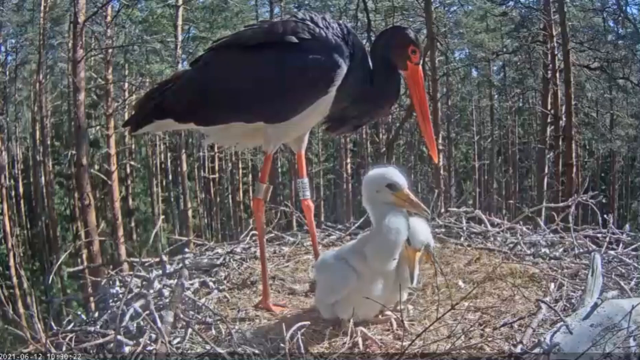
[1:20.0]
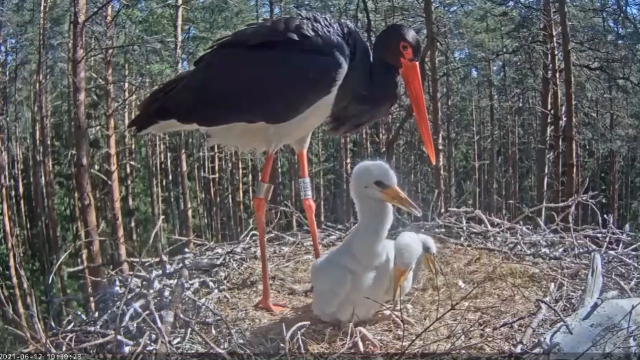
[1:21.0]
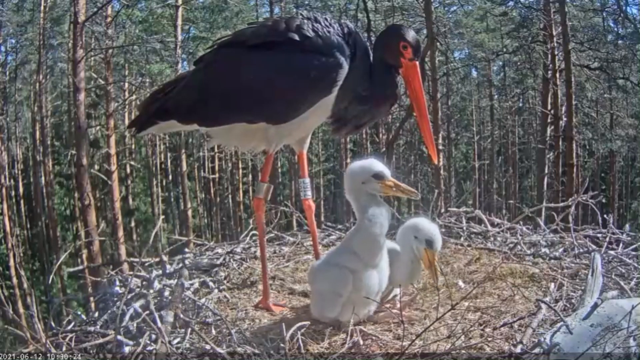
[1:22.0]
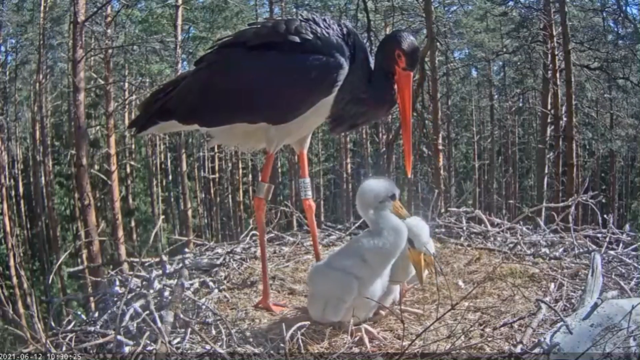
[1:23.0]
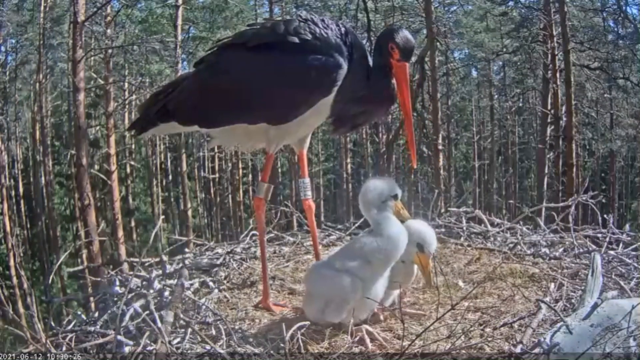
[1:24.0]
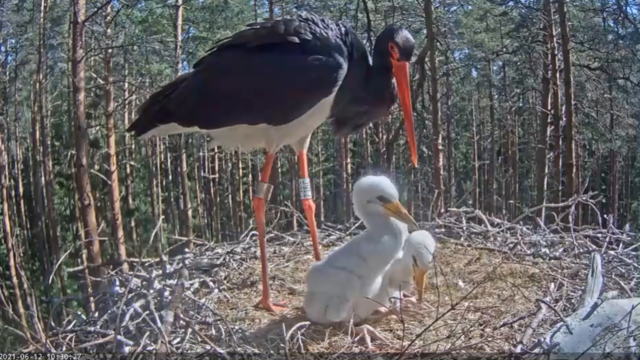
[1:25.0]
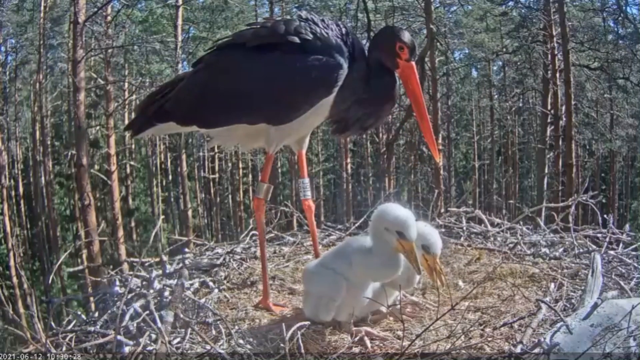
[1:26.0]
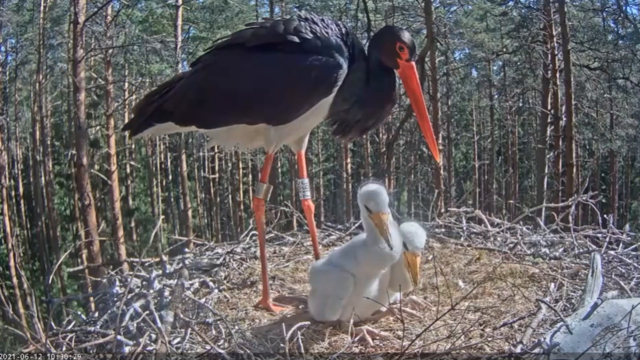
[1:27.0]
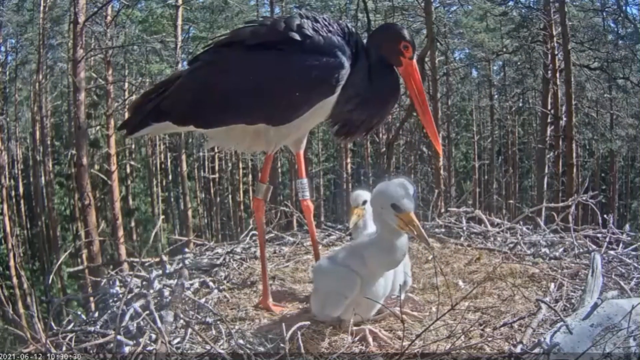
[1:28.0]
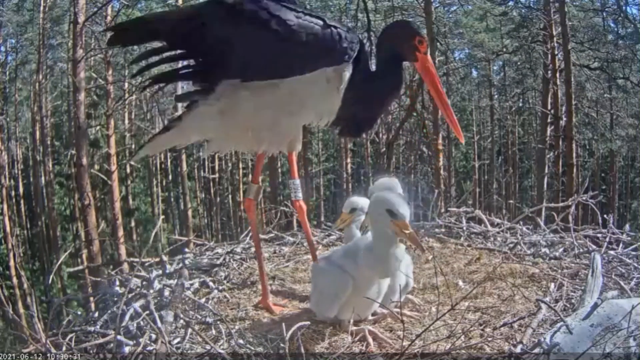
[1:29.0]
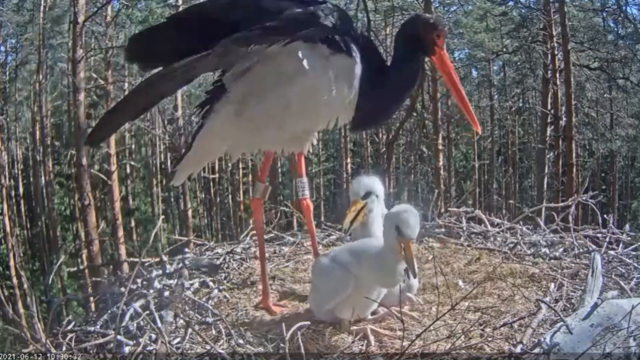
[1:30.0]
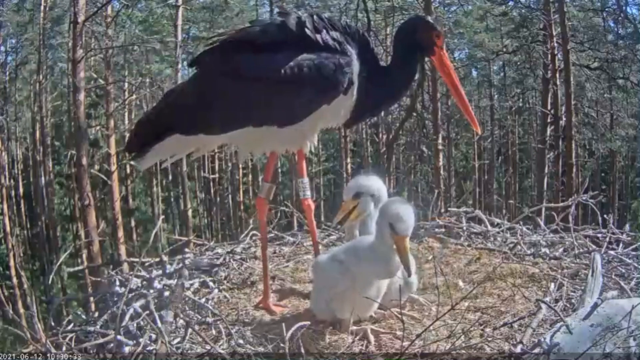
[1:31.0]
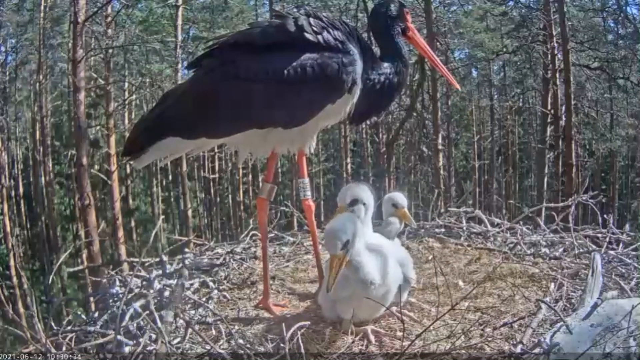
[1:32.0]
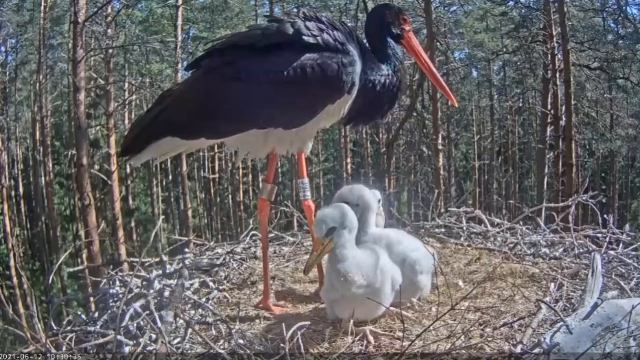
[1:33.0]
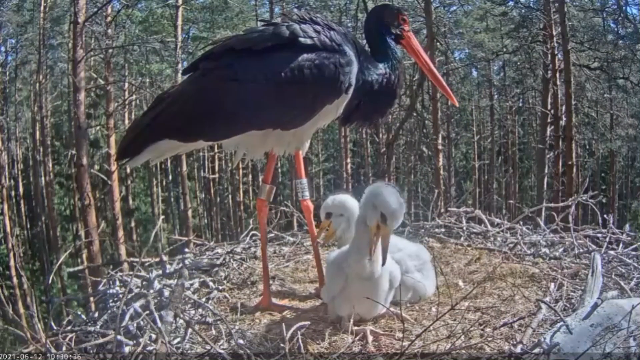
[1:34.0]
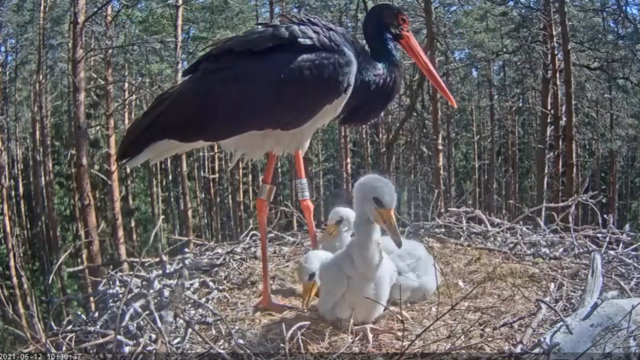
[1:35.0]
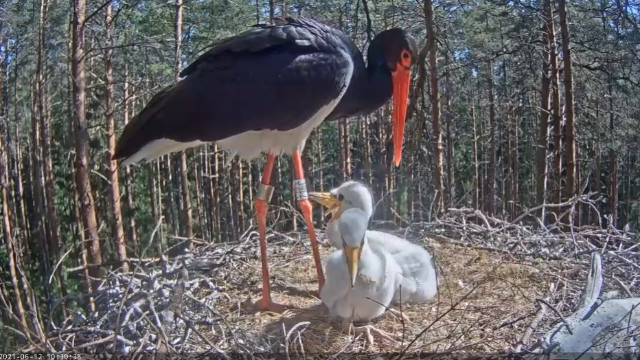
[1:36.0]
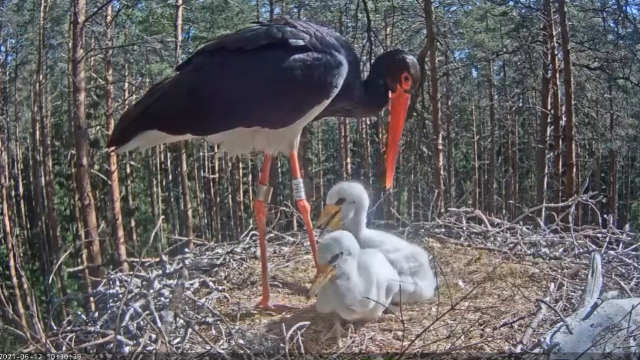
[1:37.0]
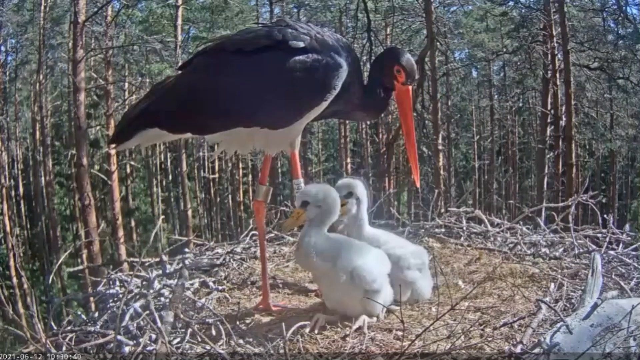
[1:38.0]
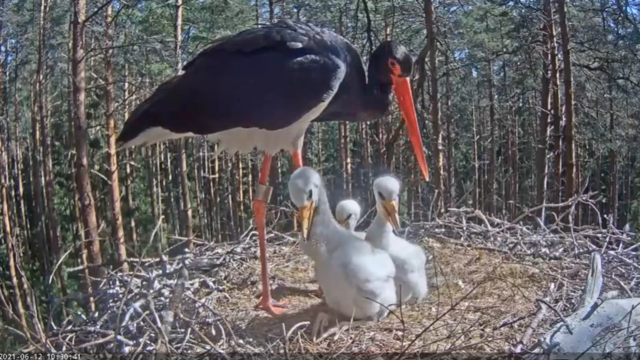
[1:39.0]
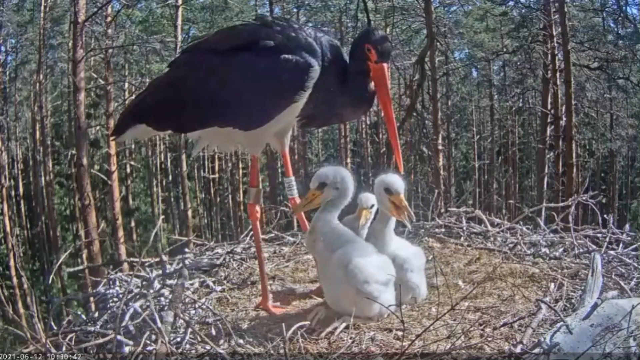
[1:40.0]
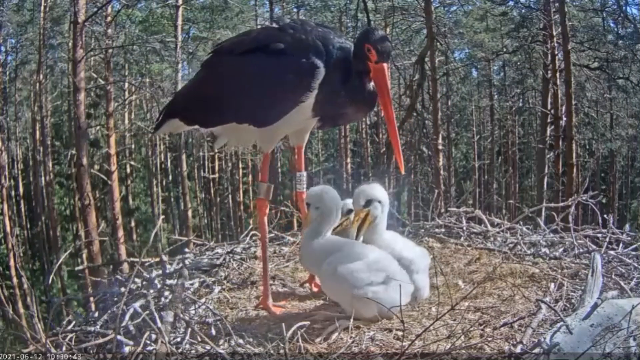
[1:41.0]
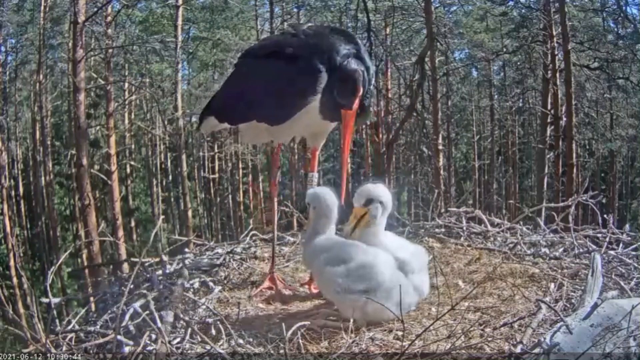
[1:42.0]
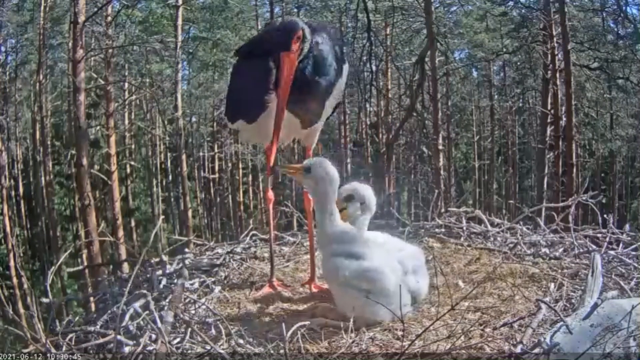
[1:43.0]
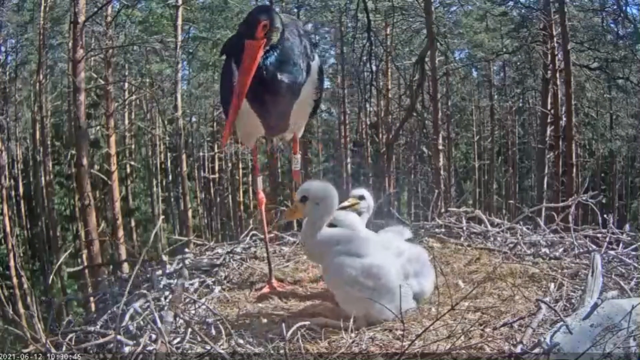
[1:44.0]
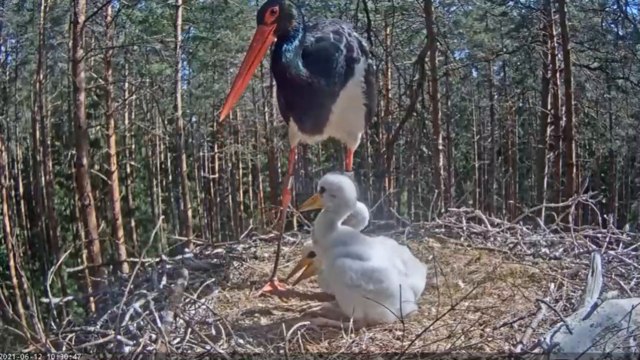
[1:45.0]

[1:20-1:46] In a foresty area, a nest right in the middle is filled with three fluffy white baby birds who may be cranes when they grow up, since the mother bird with them looks like she might be a crane. She has long, skinny legs, a black body with a white belly, and a long, pointed, skinny reddish-orange beak. She attends to her three babies, who are seemingly snuggled together inside the nest. At one point she flaps her wings, and the babies seem to flap a little too and move around her legs. Many pine trees are in the background, with blue sky seemingly filtering through the section in the back. All of the birds have eyes of about the same black color.